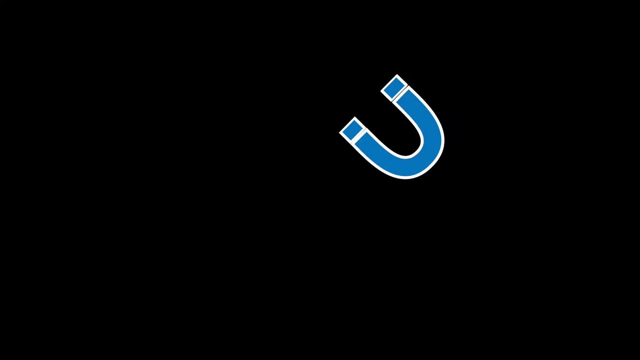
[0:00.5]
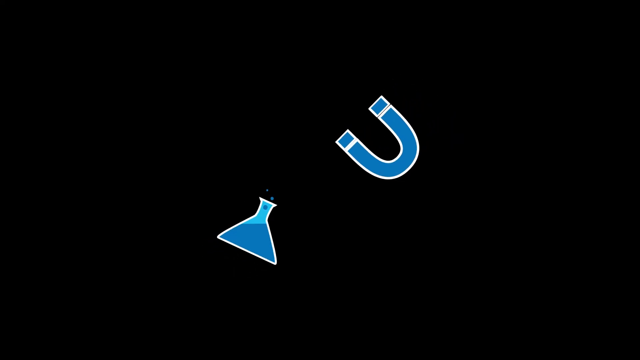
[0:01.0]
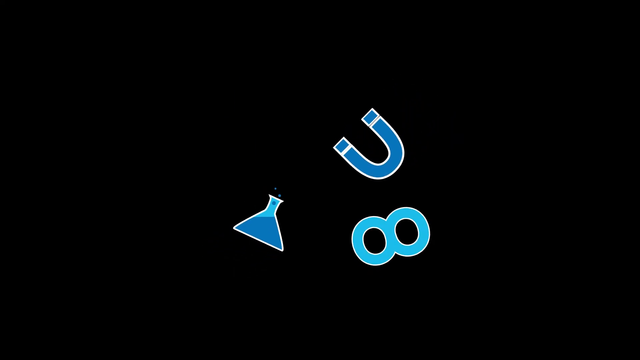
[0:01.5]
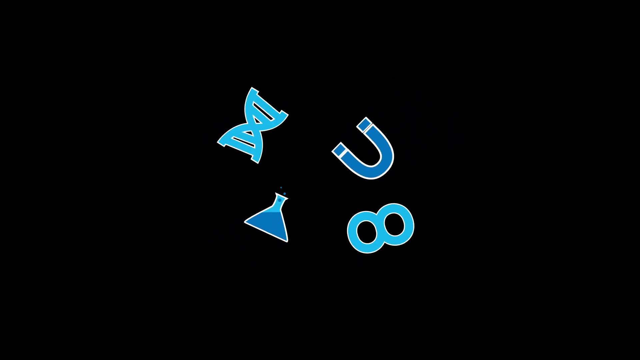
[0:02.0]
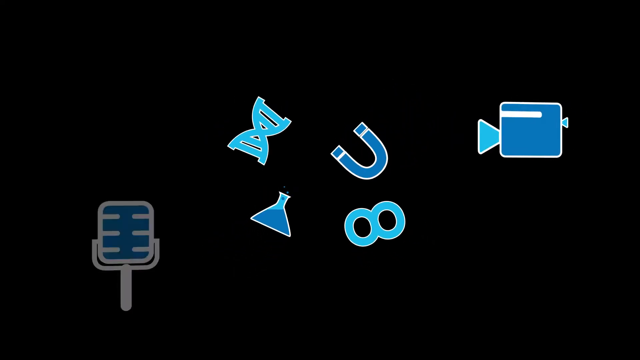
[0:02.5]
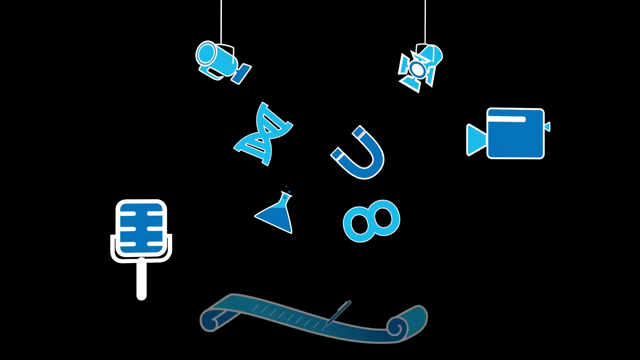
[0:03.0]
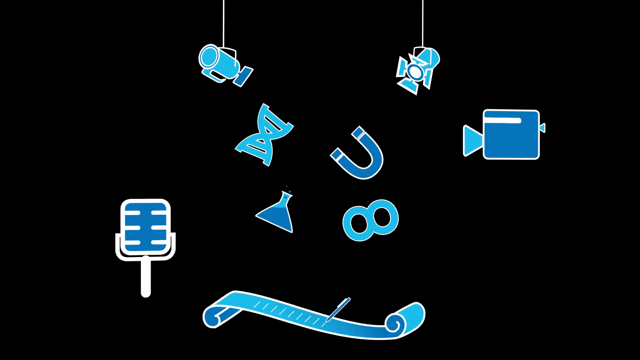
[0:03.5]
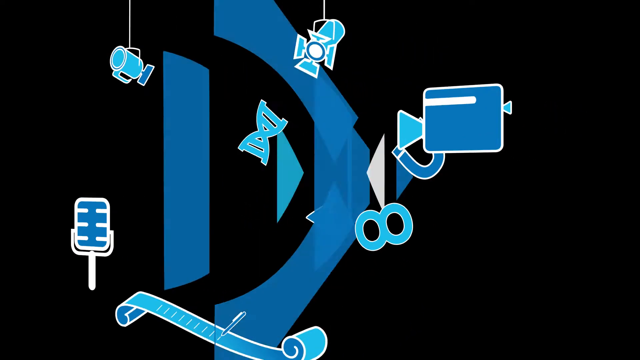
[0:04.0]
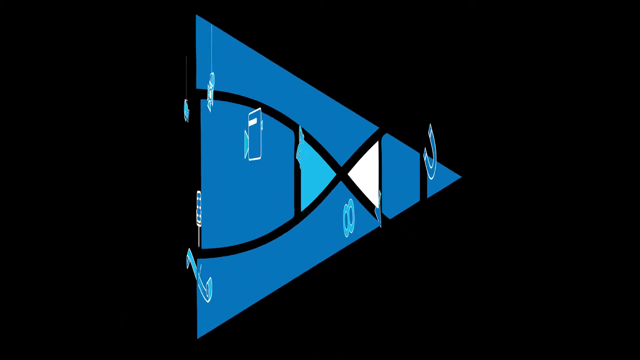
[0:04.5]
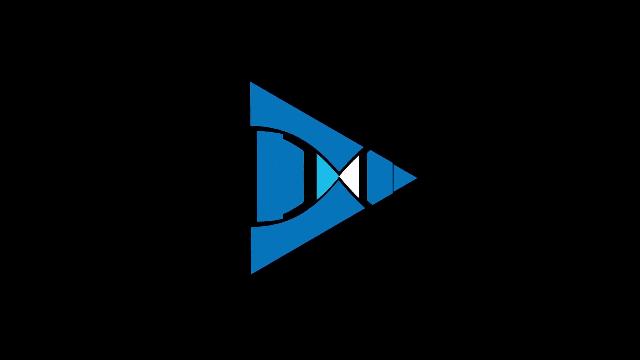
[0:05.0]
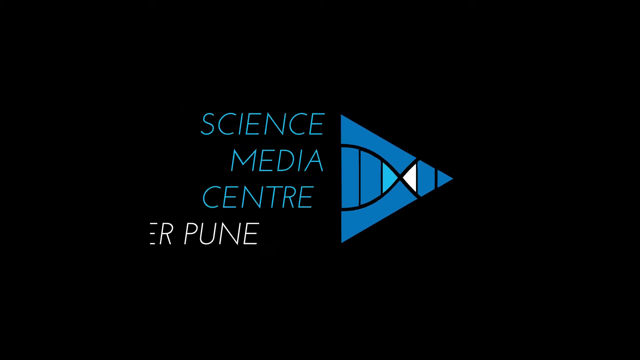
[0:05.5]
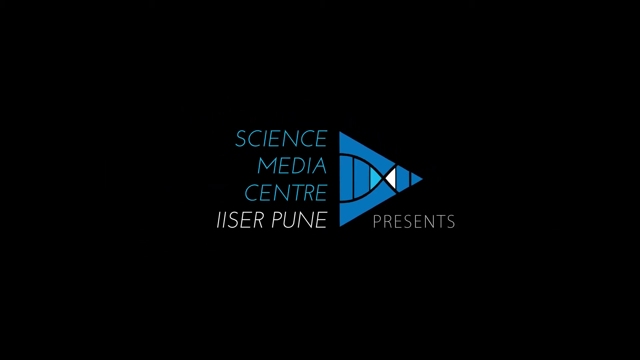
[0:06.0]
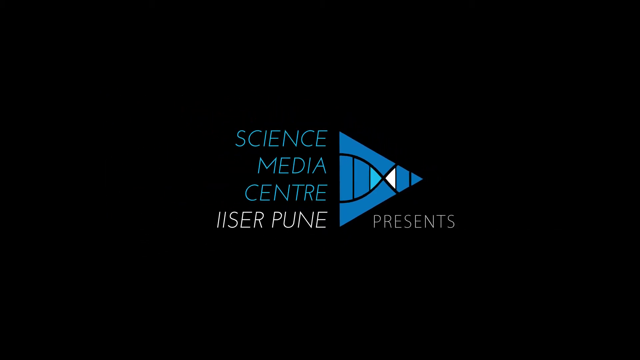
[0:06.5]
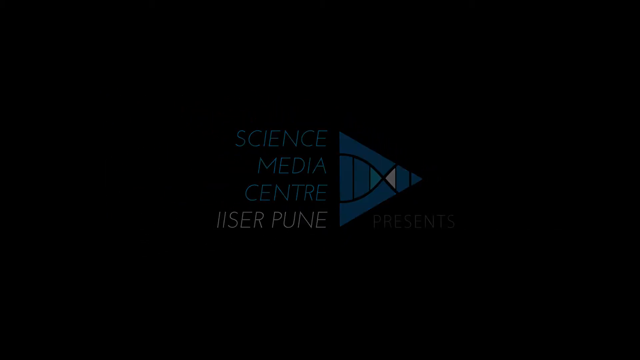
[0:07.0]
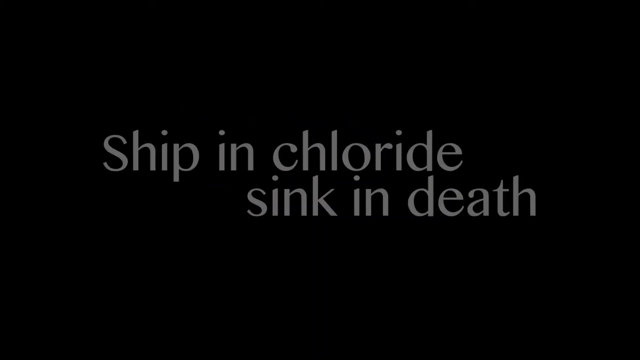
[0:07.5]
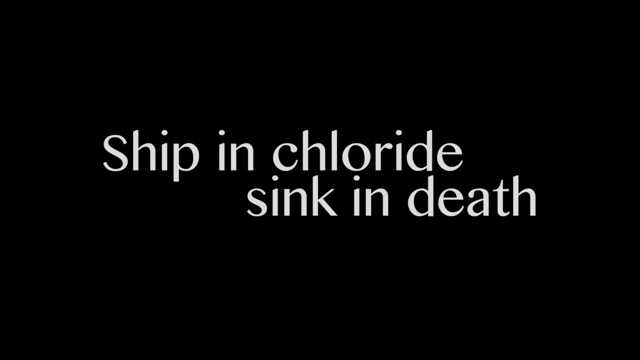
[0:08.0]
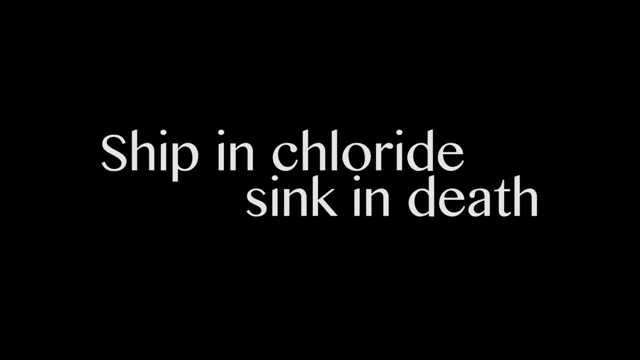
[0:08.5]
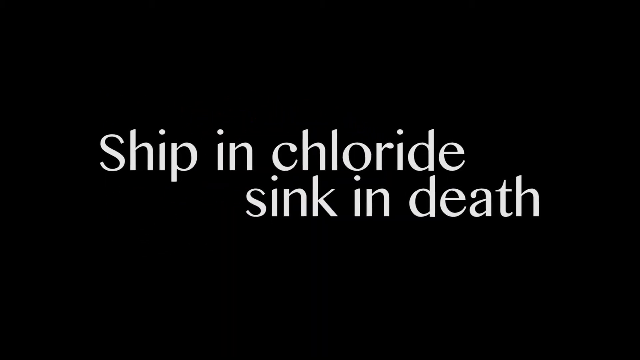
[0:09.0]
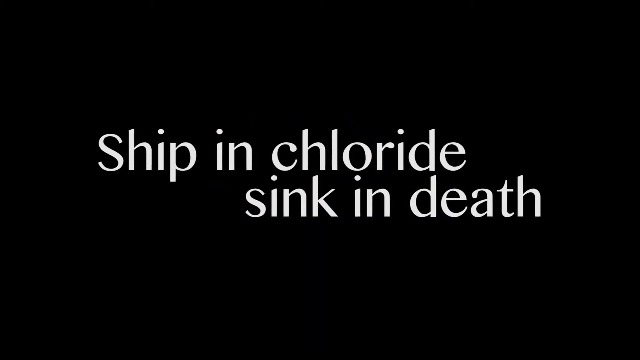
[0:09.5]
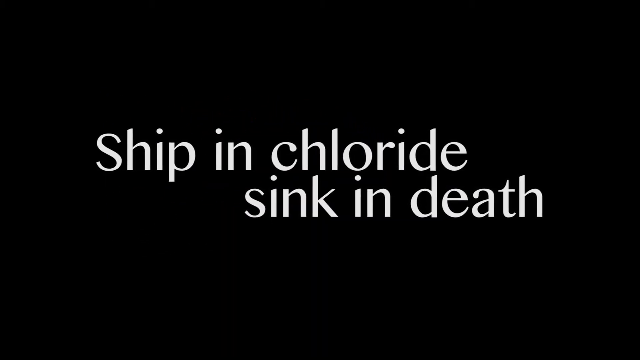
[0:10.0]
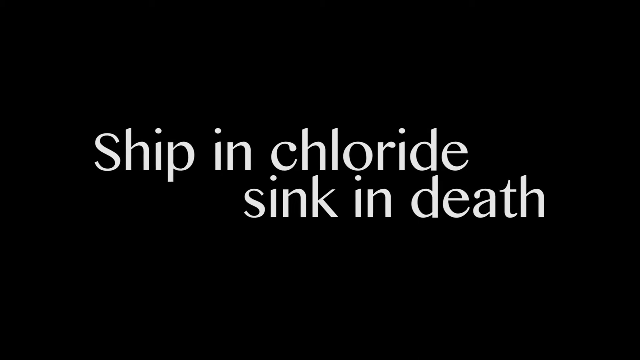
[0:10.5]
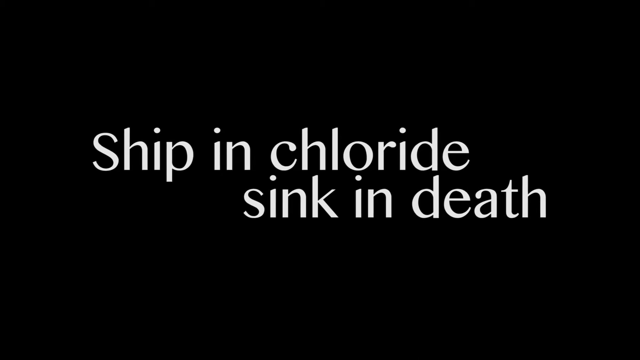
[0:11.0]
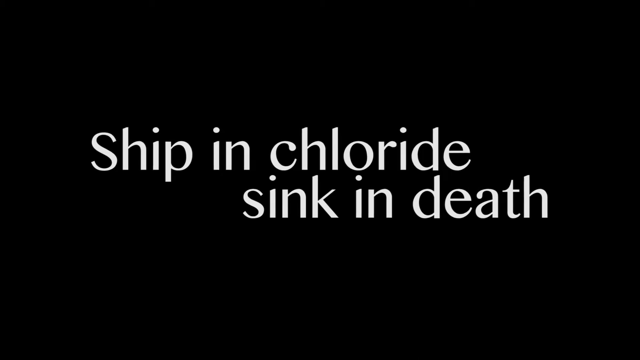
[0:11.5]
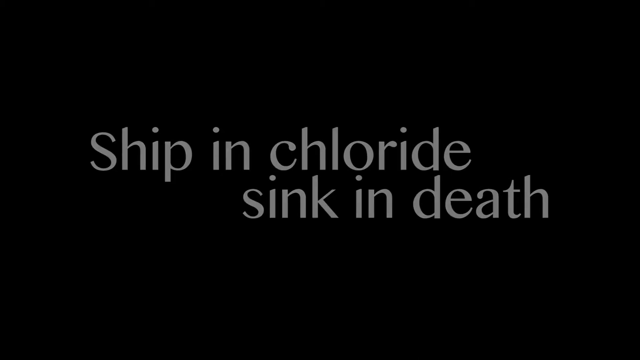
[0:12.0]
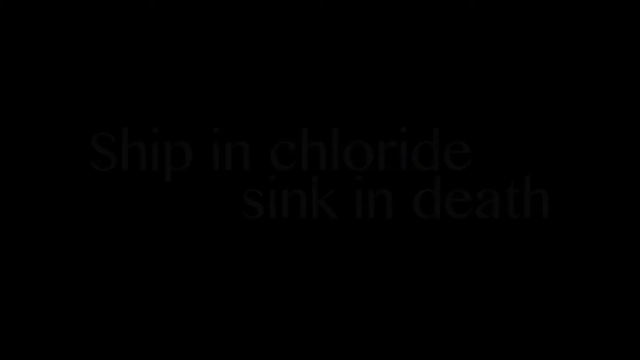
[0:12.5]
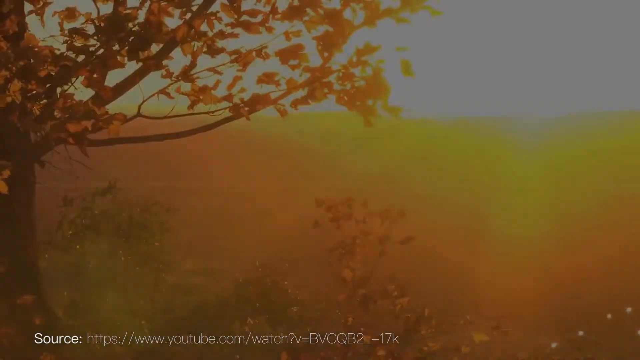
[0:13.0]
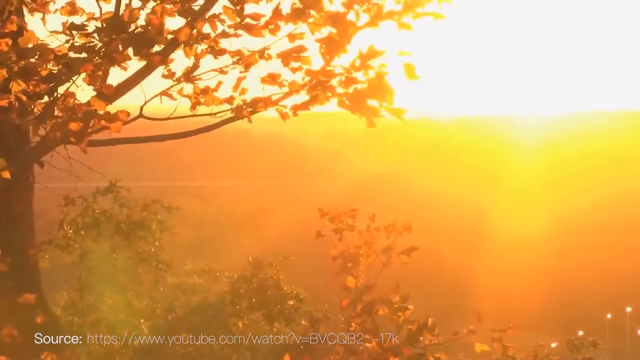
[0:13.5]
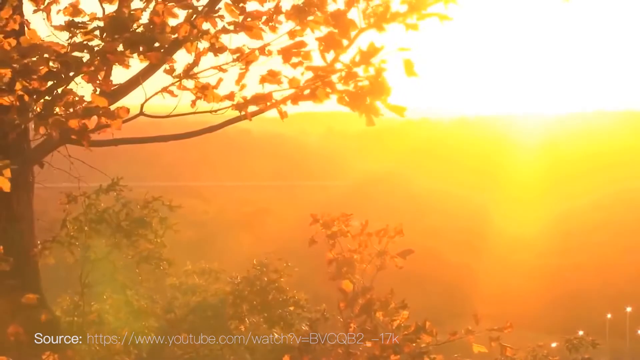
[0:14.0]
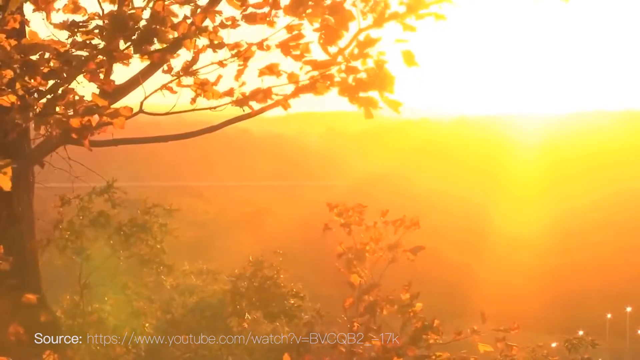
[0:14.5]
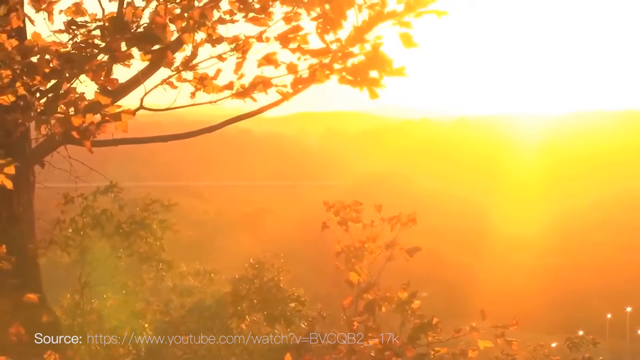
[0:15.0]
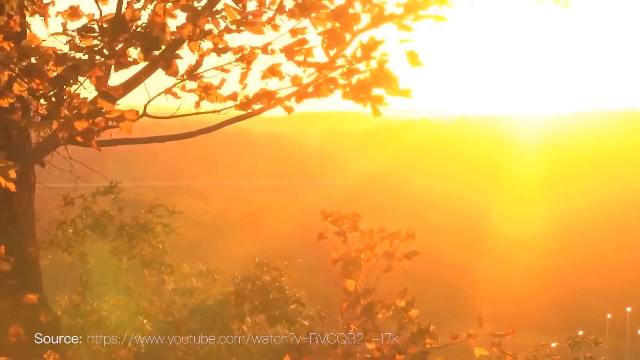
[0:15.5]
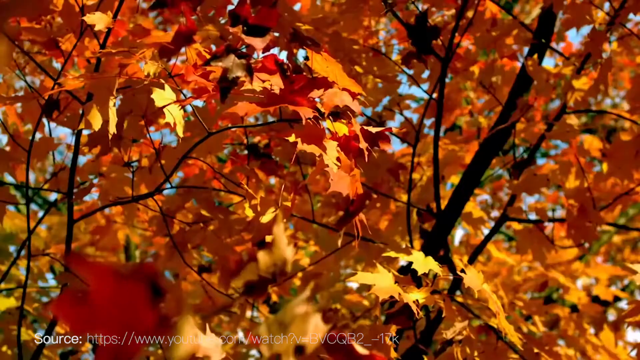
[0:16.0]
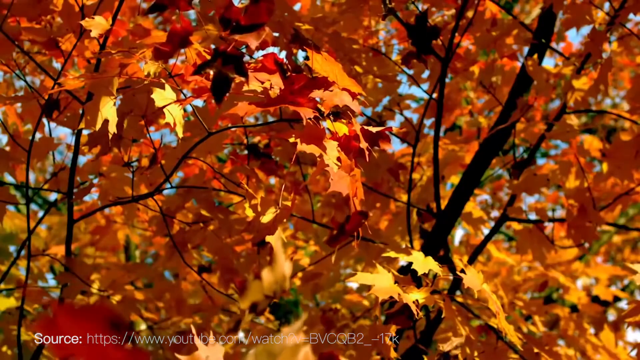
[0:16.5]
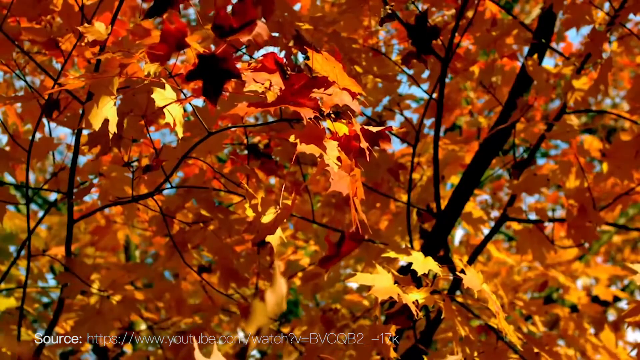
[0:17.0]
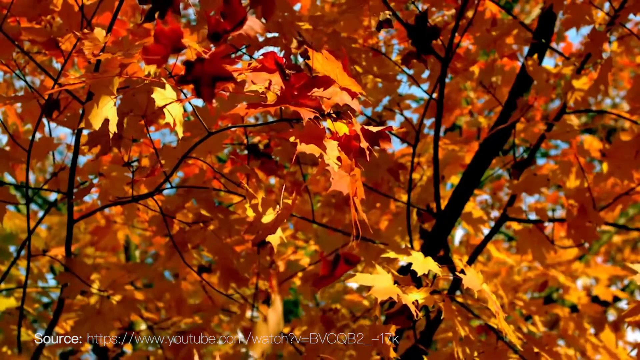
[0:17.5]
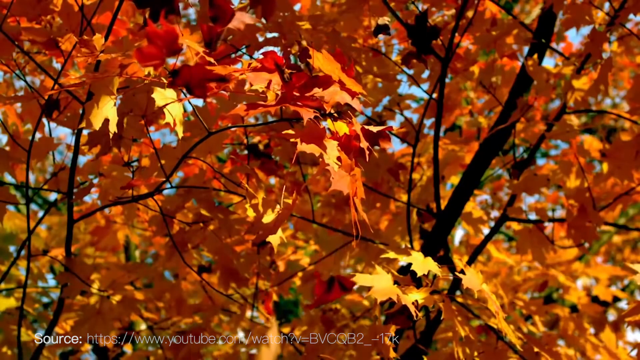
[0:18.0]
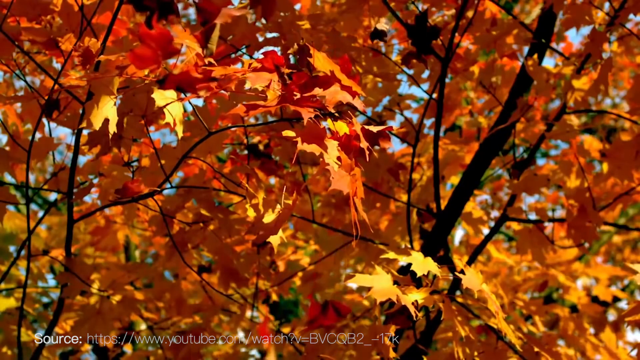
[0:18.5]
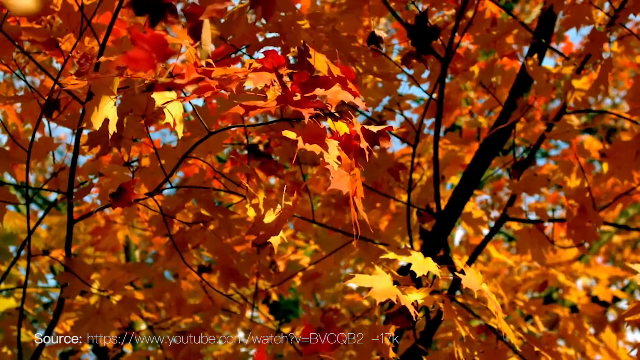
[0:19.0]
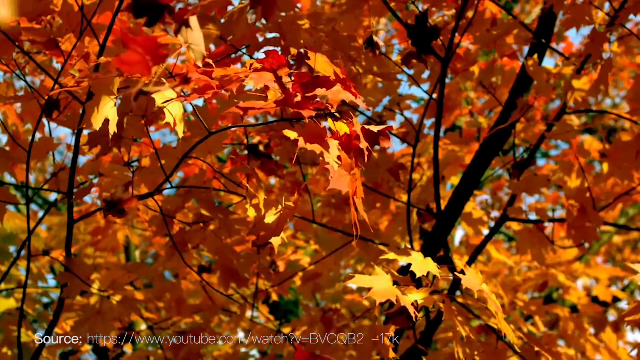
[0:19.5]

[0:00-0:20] The video opens with a sequence of objects that include microphones, a camera, beacons and a double helix. The name of the video then appears, presented by Science Media Center with "Iser Puhn presents" and a title that mentions chloride and death. Next, the sun rises in autumn over the horizon while trees gently sway in the wind and their leaves turn. A close-up follows of orange-red leaves falling in a gentle wind, visible in the vibration of the leaves.